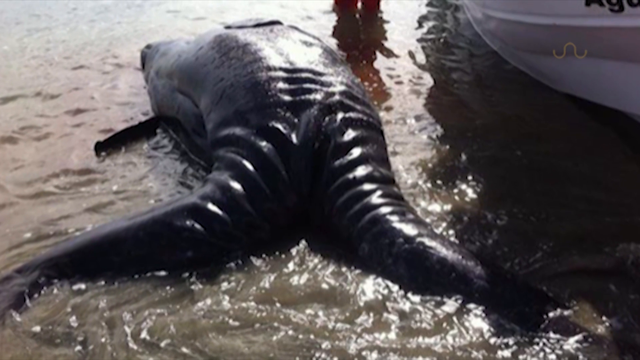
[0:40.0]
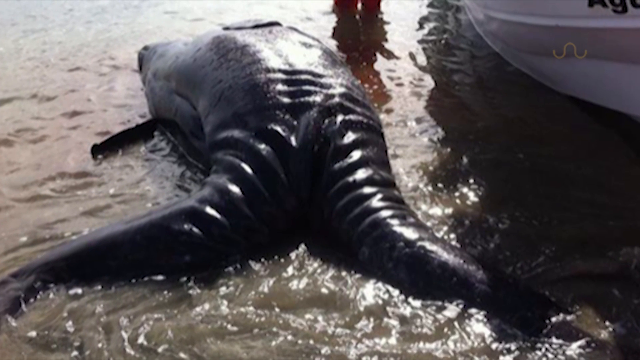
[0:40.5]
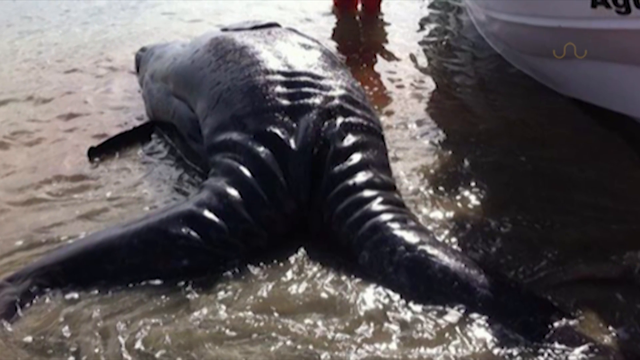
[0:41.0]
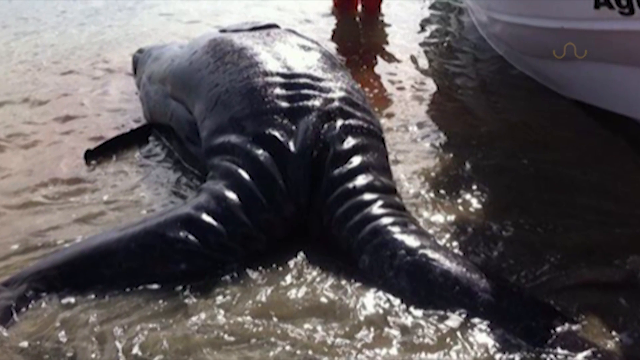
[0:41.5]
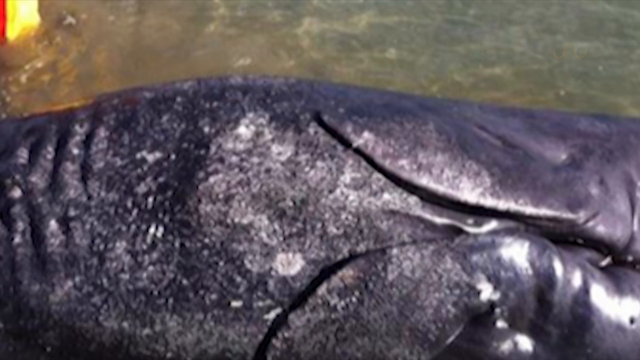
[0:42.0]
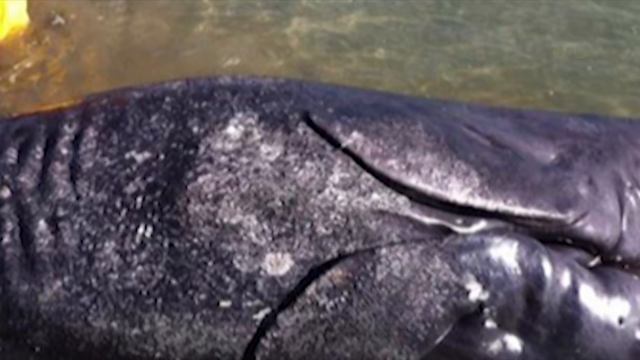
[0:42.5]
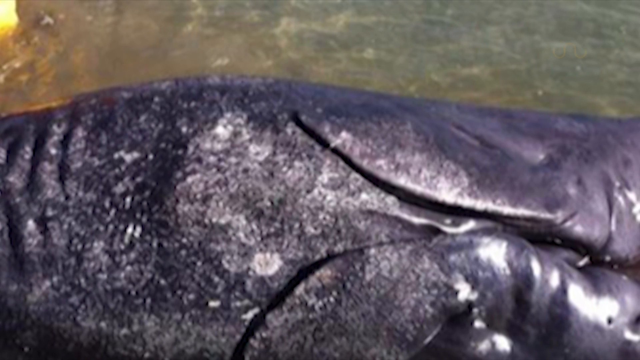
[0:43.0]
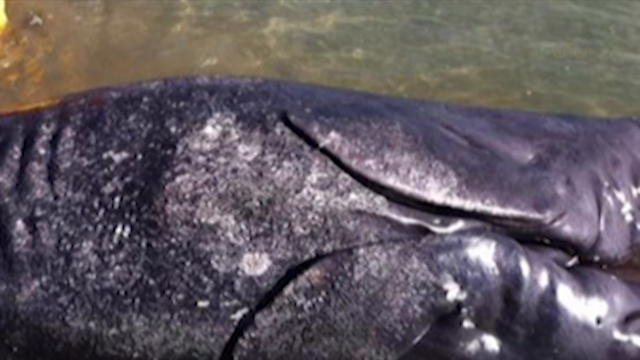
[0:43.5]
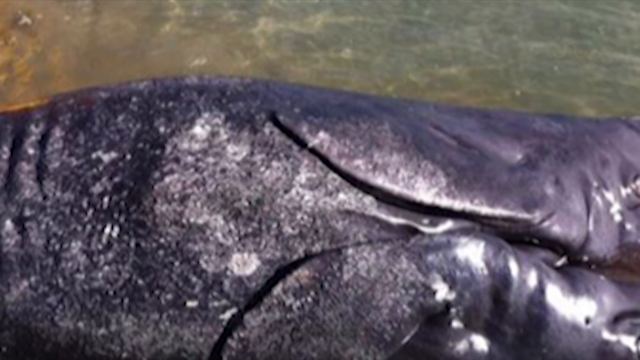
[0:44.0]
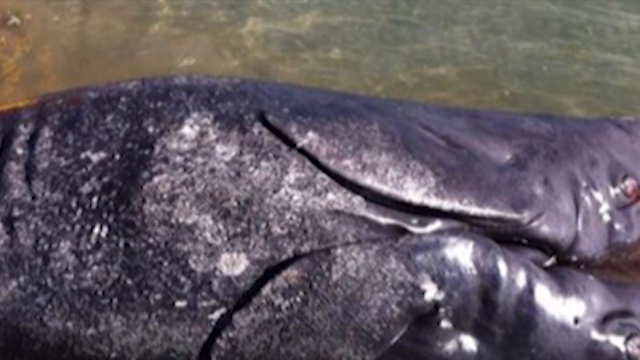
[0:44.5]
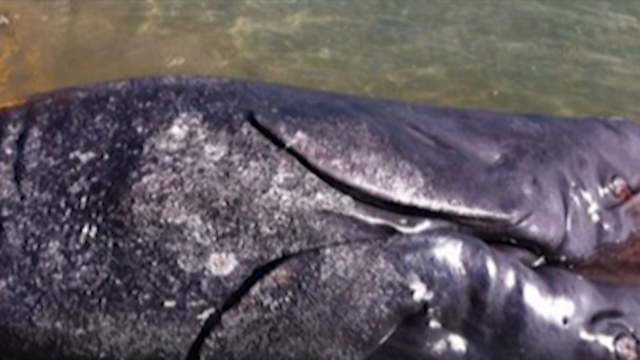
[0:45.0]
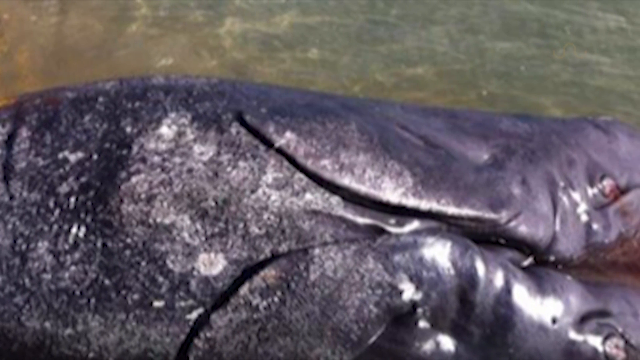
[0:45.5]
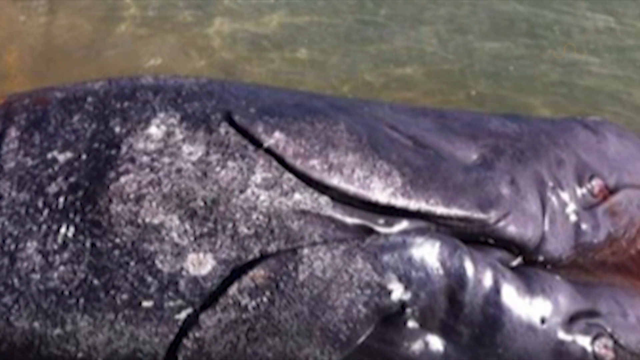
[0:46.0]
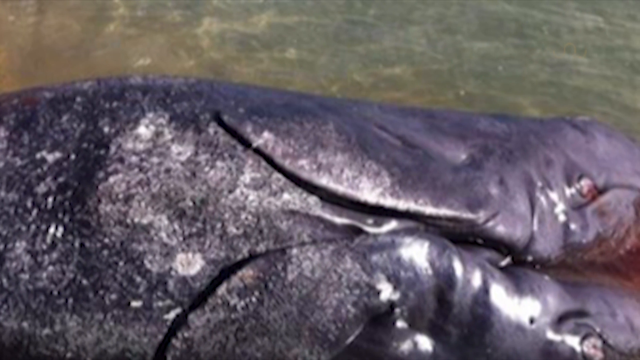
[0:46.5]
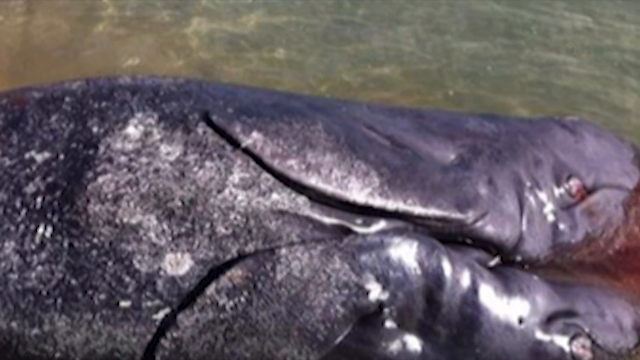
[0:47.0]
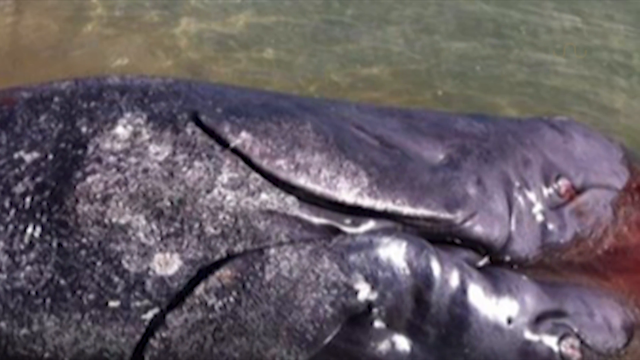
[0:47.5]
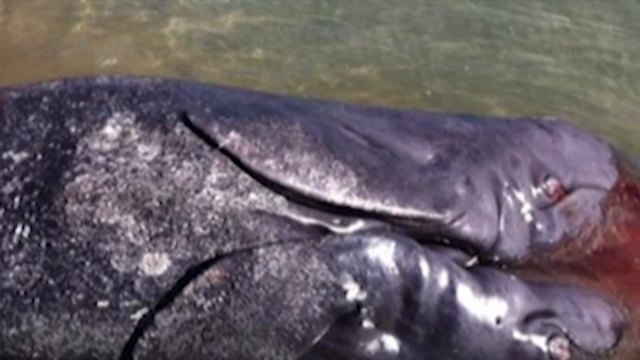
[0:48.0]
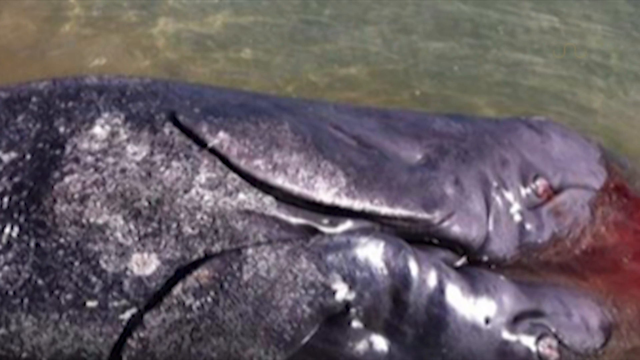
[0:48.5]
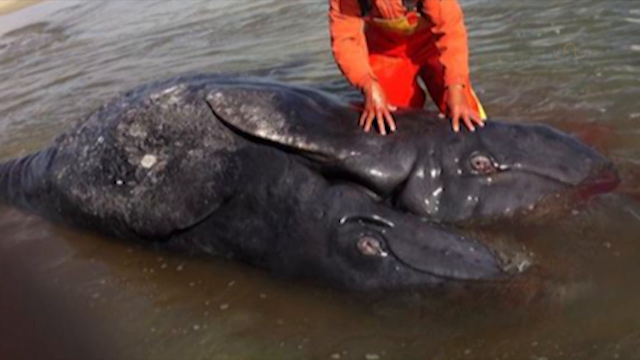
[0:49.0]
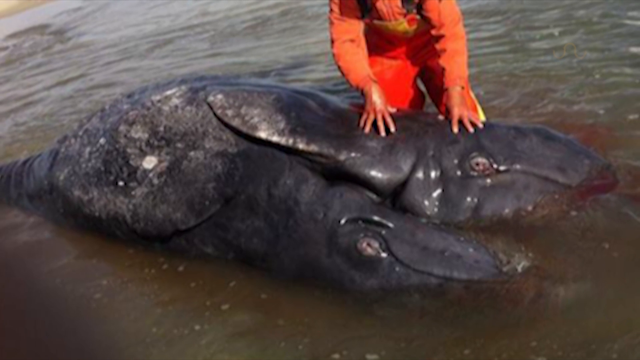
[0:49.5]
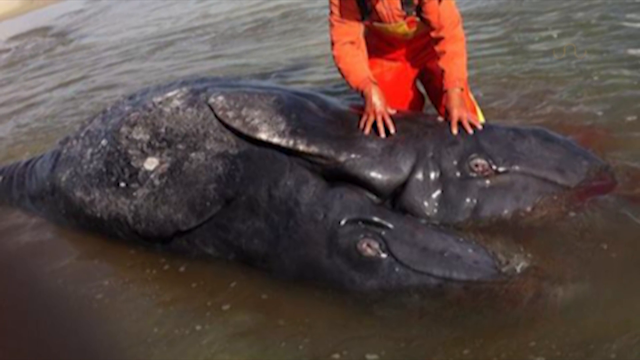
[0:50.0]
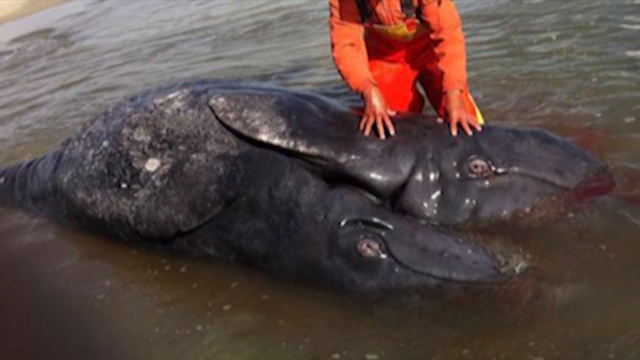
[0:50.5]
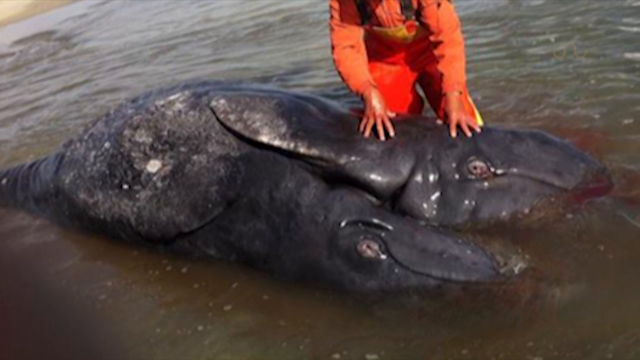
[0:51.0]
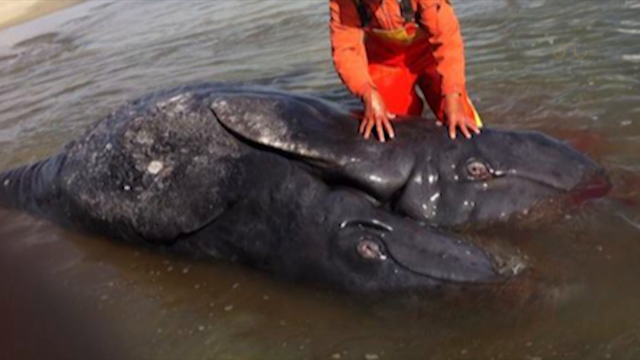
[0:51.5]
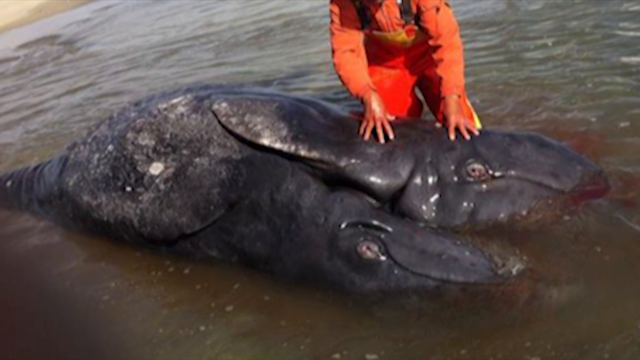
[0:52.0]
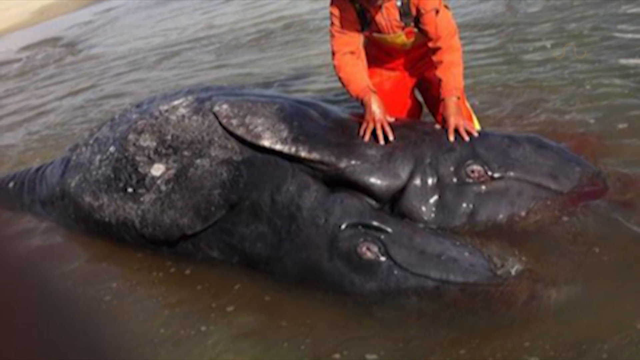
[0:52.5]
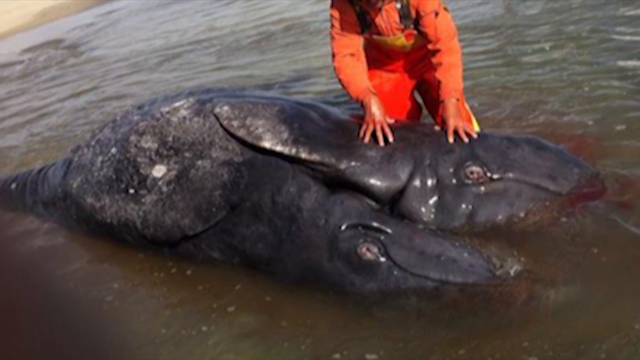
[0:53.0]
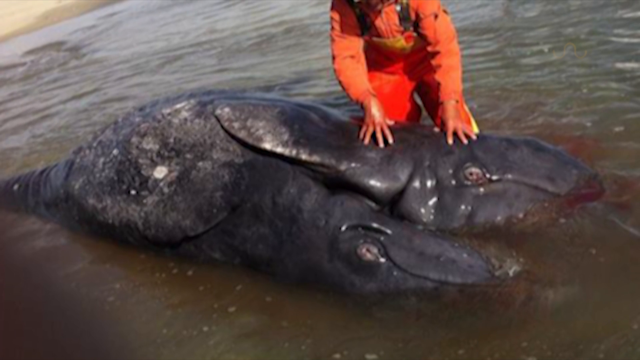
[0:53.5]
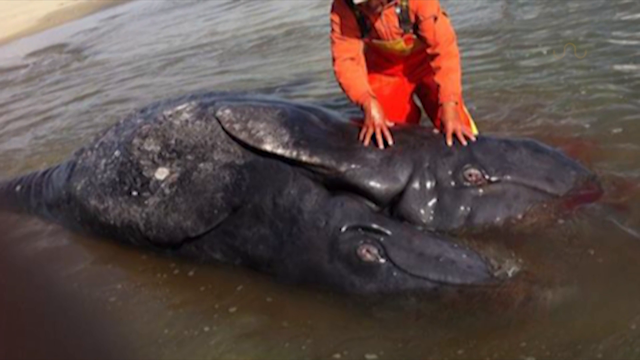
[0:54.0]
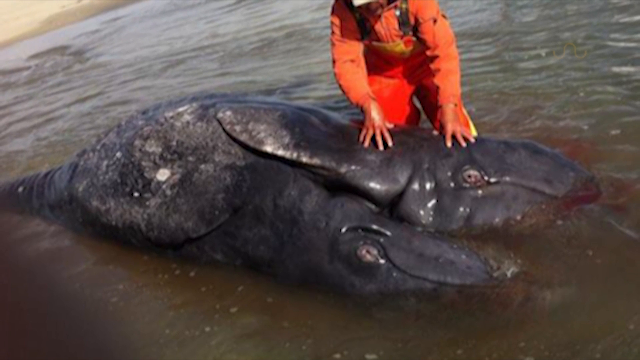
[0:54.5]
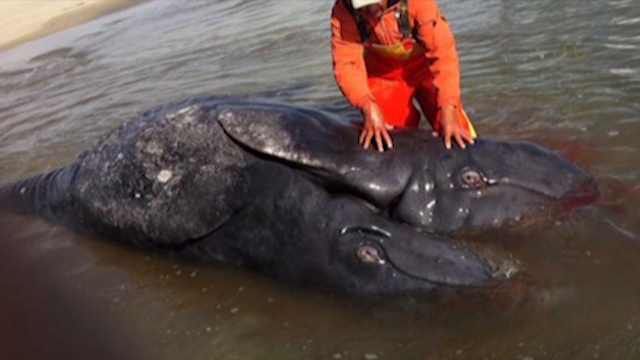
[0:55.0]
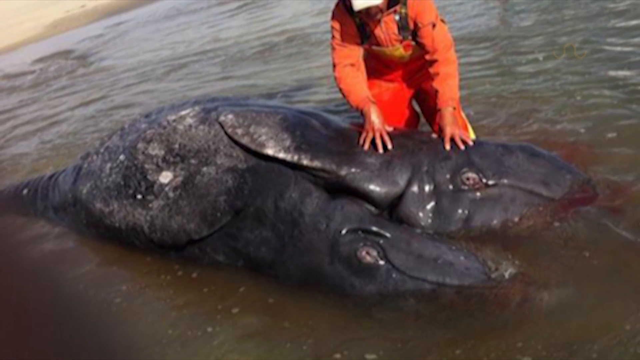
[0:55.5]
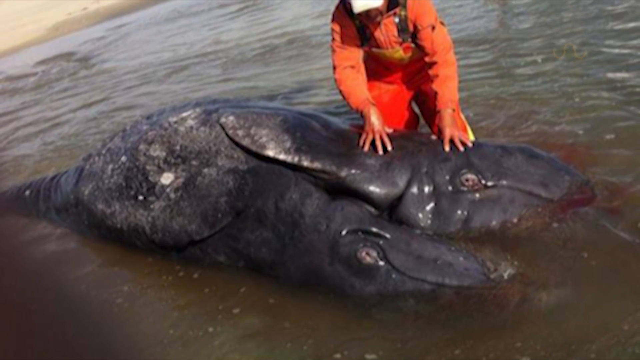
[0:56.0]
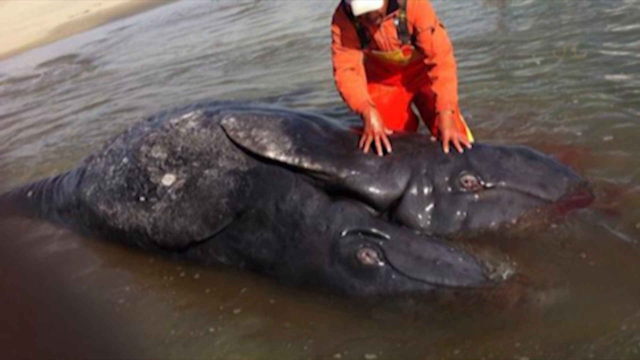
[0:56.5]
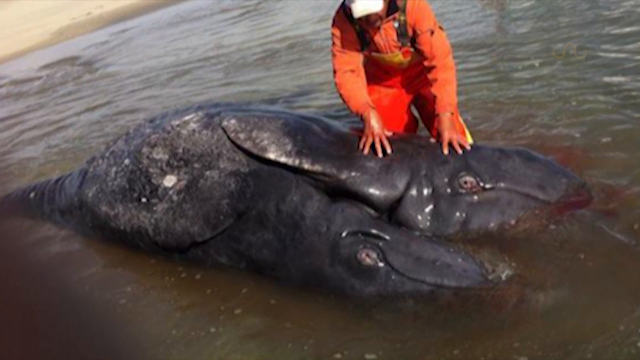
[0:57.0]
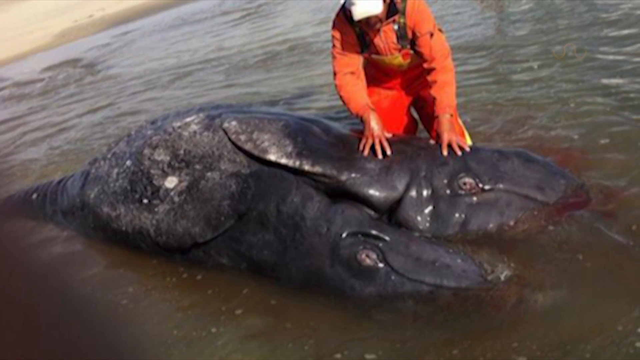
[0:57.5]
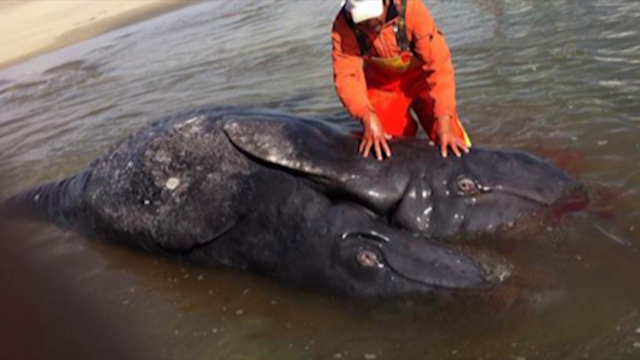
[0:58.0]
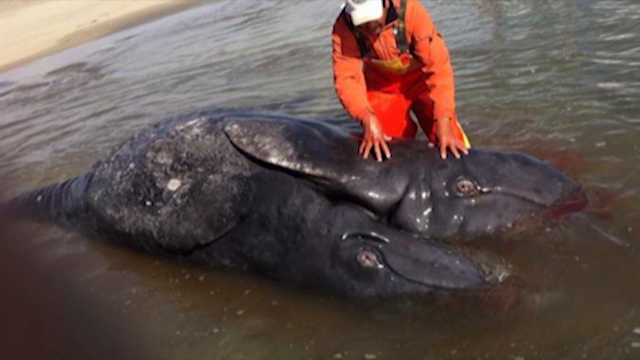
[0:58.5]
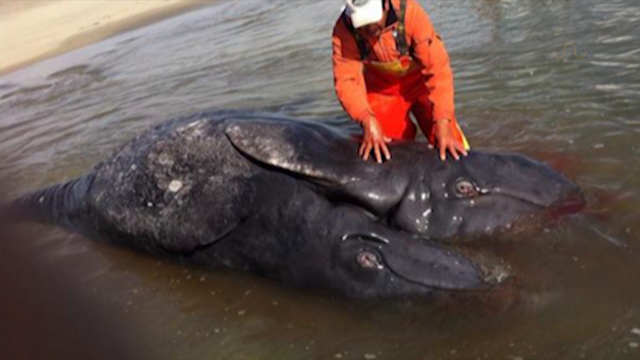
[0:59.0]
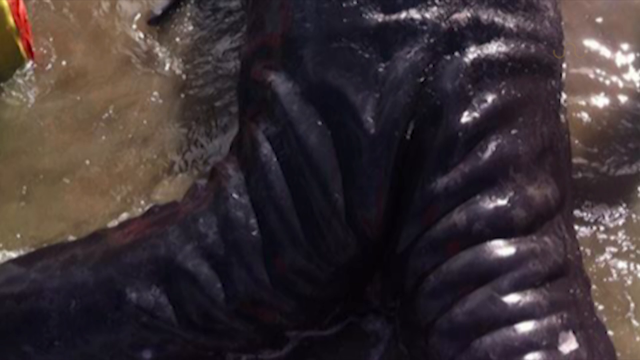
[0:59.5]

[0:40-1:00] A large water-dwelling animal appears to have two tails or two fins, which look almost like an elephant trunk. It is just sitting there, gray or black, a really dark color. A boat is visible along with someone's feet in the water, and they appear to be assisting the animal in some way. A close-up shows more of its body: it has eyes, a very unusual gray body, and what appears to be two heads. A person in an orange jumpsuit touches the top of its head while it is kind of laying there. It may be bleeding, as something red is in the water. Its body has several wrinkles, and the person appears to be checking it.